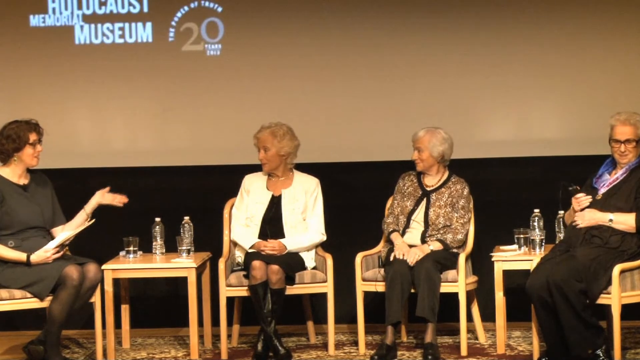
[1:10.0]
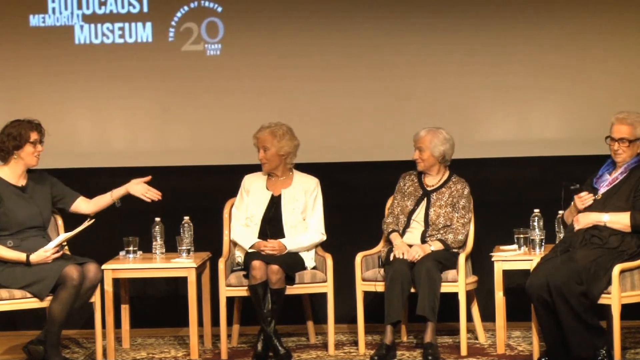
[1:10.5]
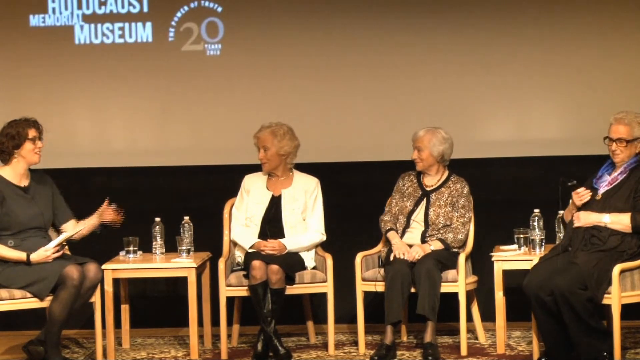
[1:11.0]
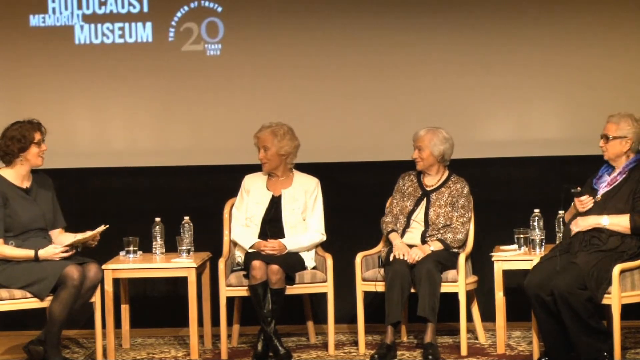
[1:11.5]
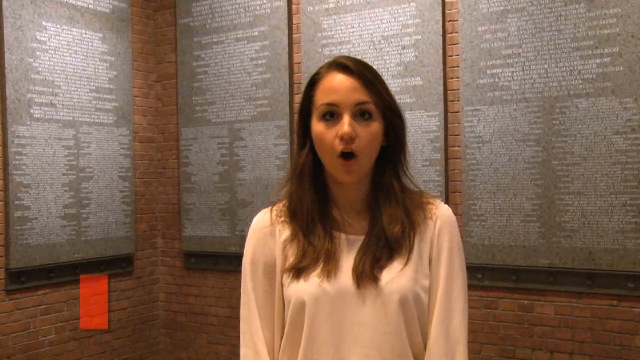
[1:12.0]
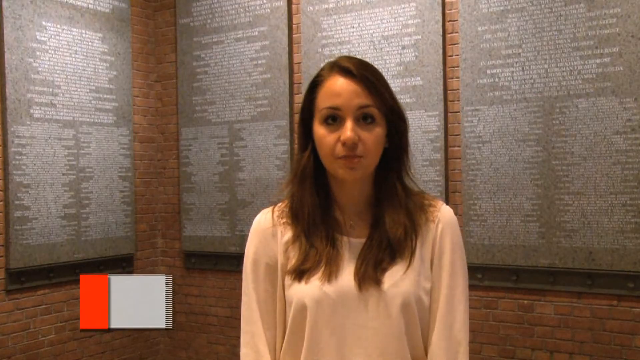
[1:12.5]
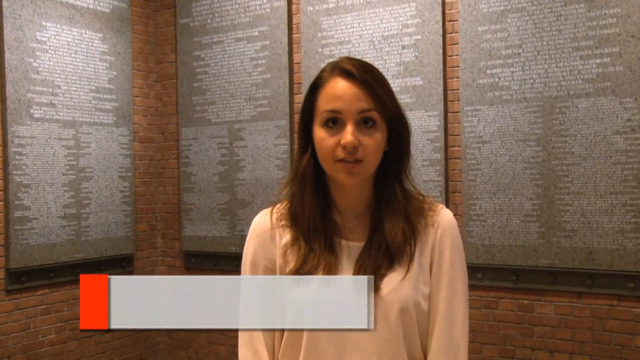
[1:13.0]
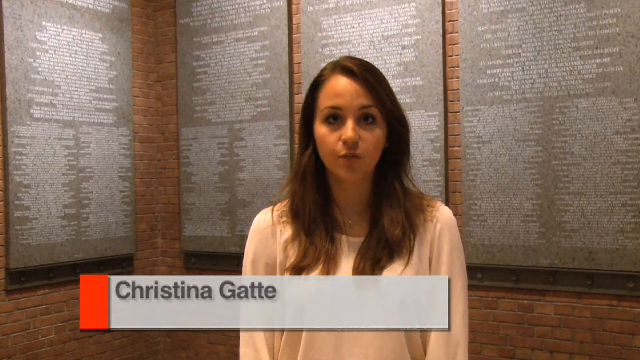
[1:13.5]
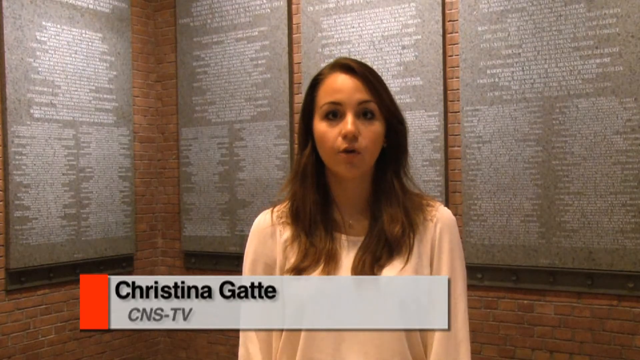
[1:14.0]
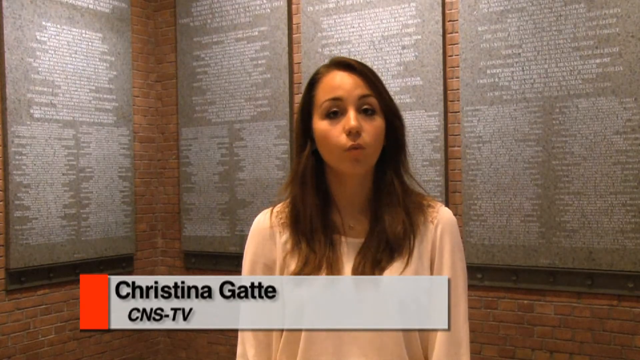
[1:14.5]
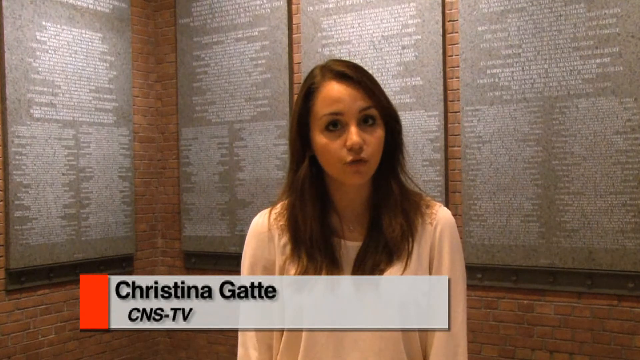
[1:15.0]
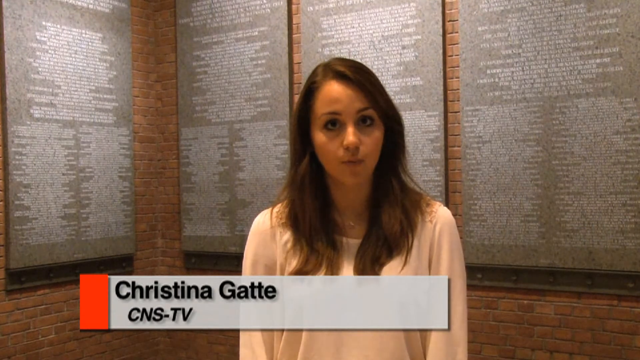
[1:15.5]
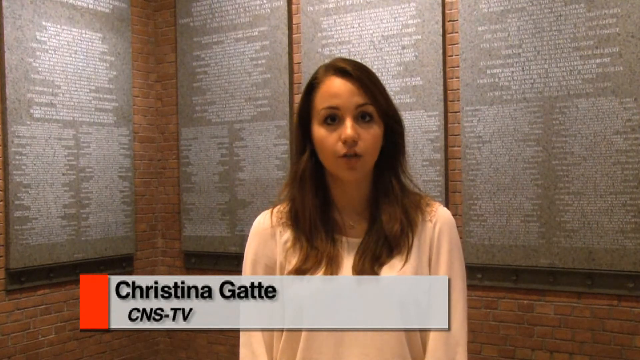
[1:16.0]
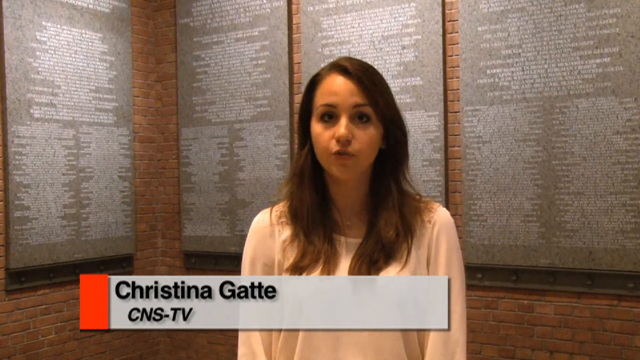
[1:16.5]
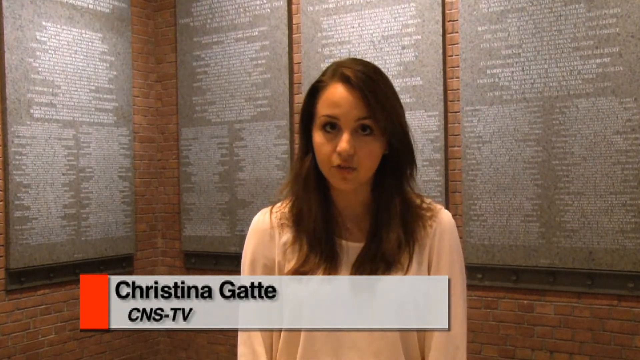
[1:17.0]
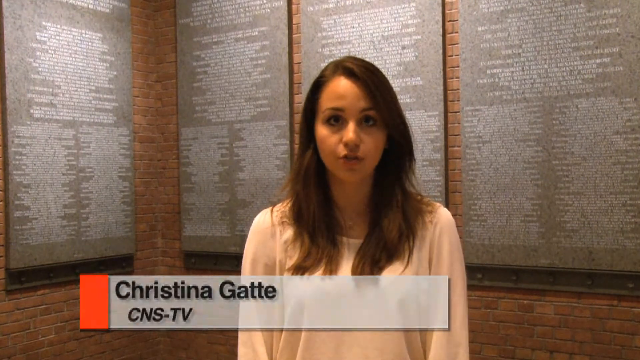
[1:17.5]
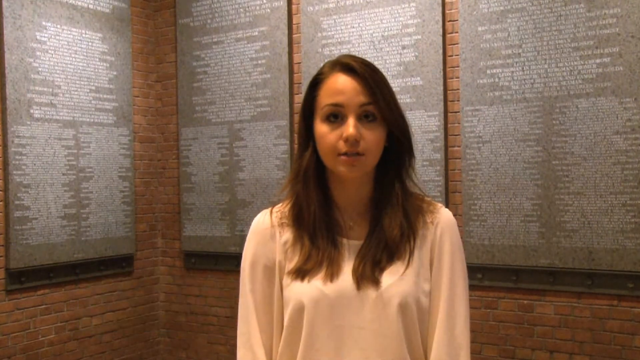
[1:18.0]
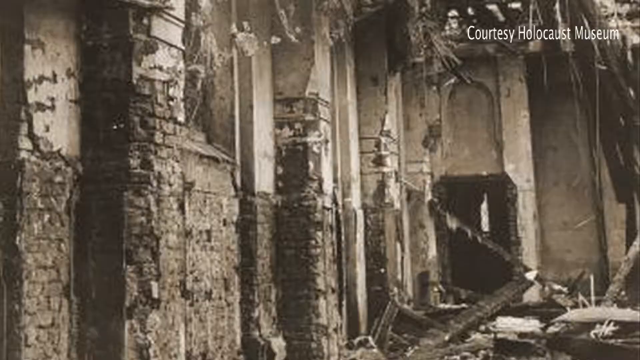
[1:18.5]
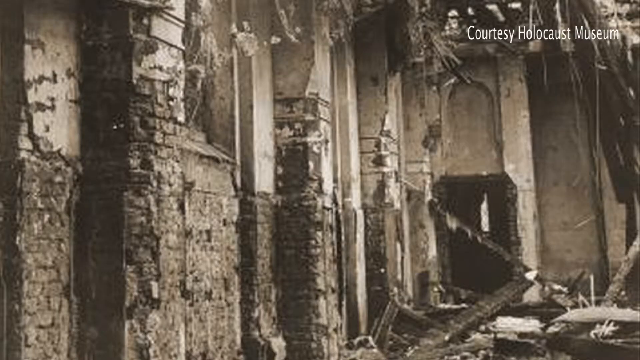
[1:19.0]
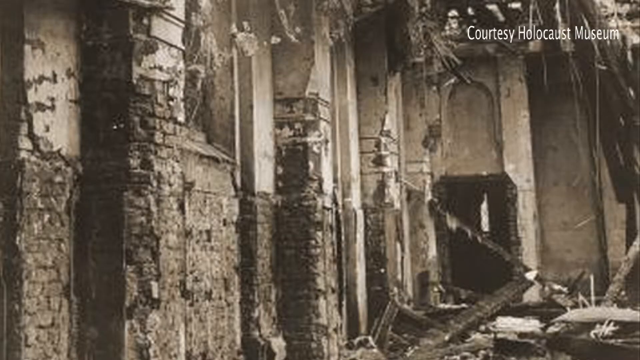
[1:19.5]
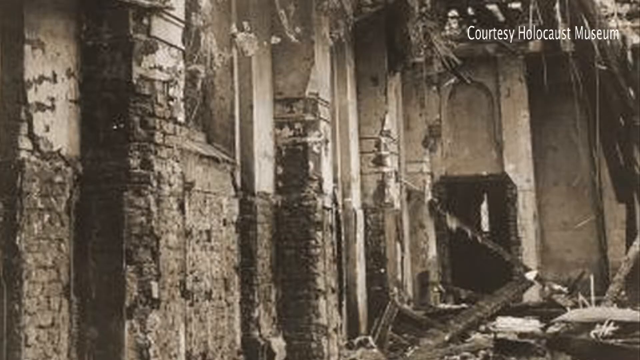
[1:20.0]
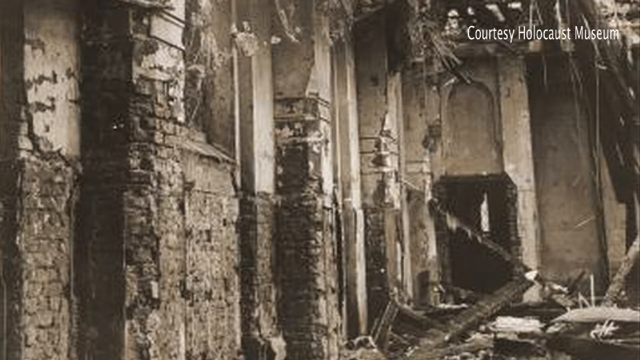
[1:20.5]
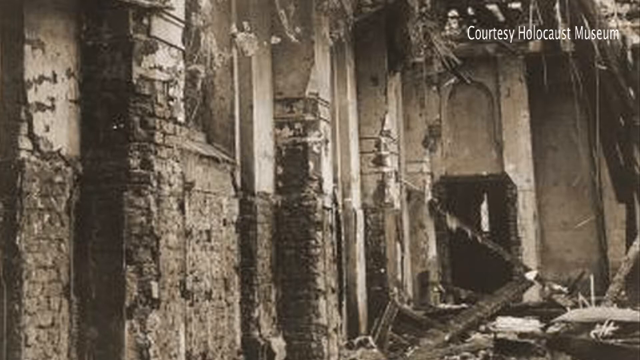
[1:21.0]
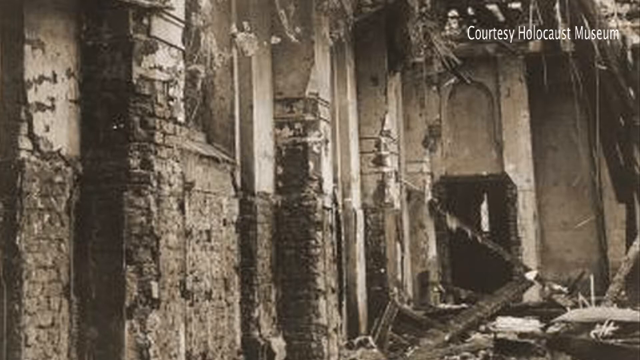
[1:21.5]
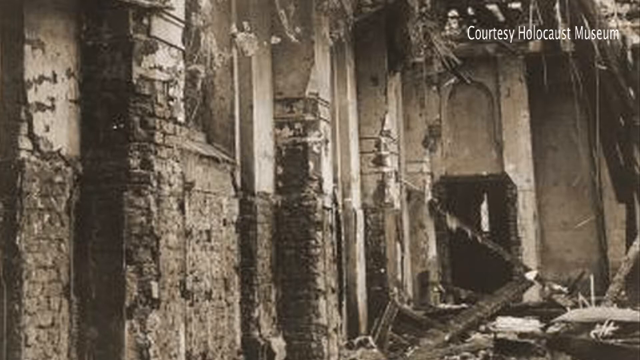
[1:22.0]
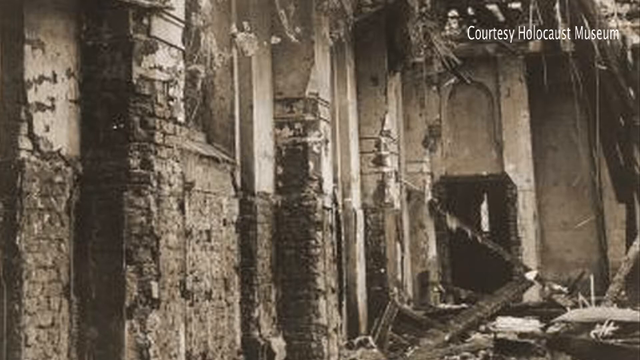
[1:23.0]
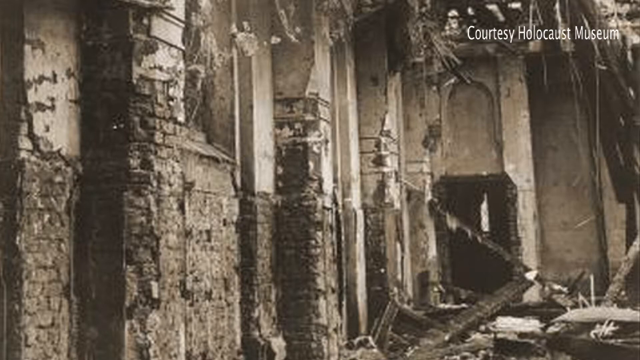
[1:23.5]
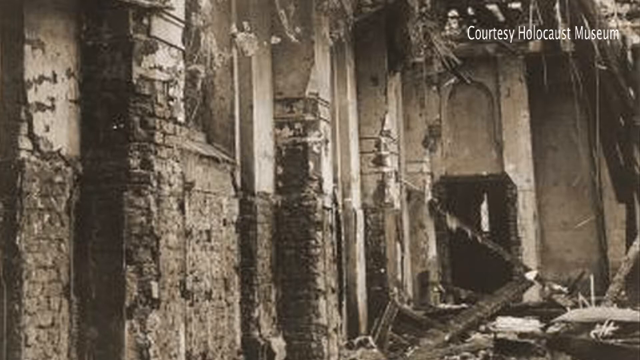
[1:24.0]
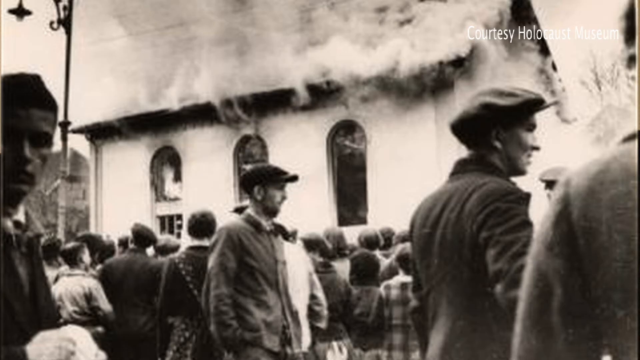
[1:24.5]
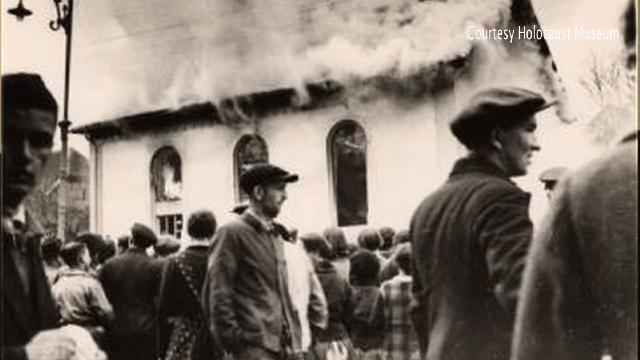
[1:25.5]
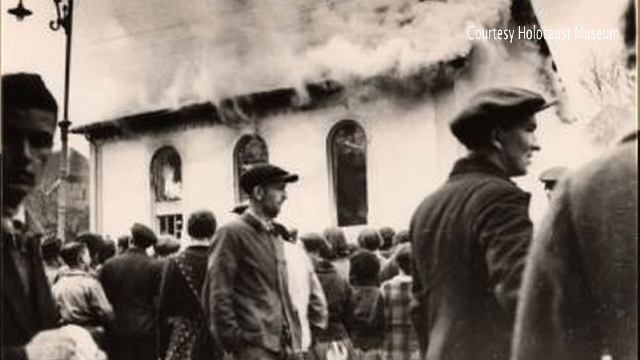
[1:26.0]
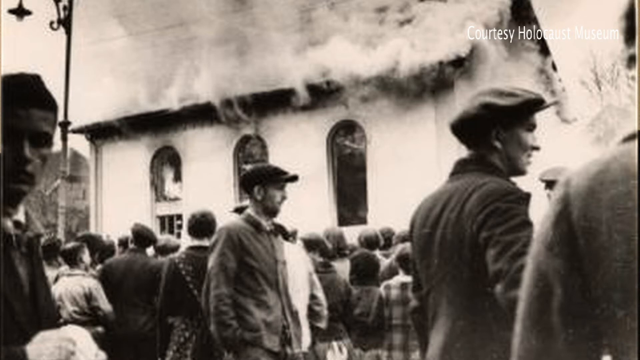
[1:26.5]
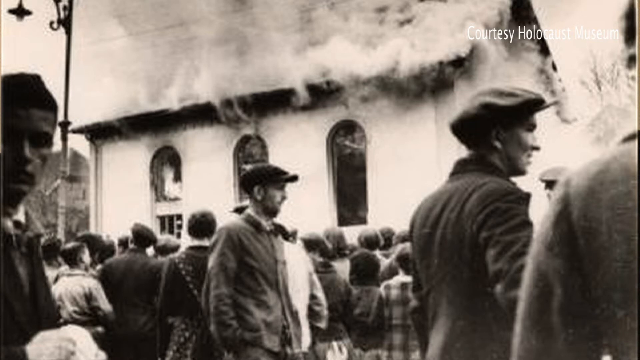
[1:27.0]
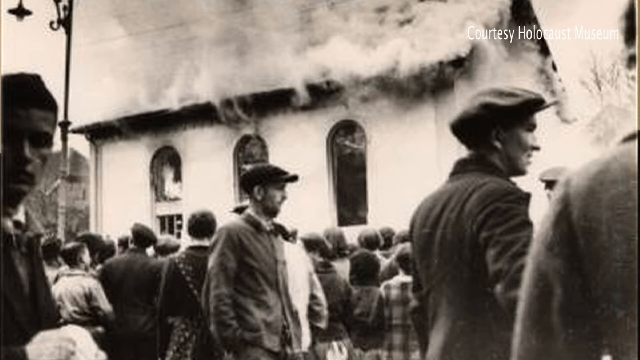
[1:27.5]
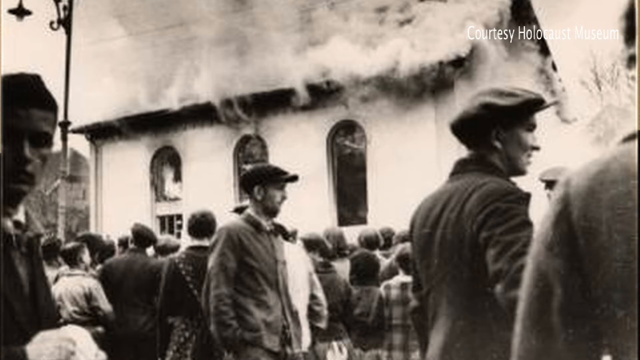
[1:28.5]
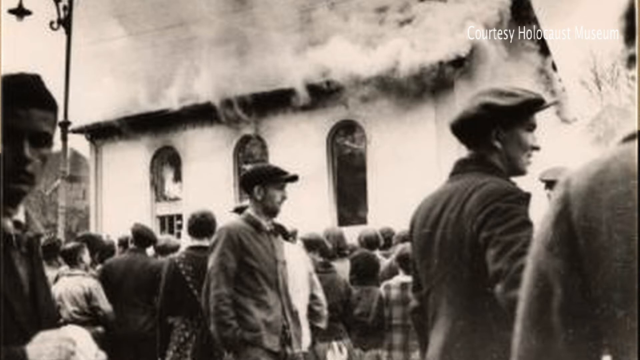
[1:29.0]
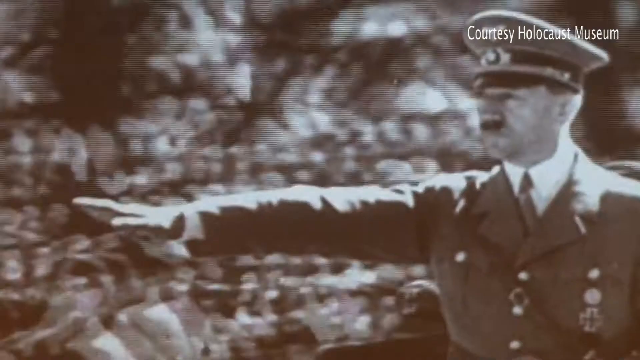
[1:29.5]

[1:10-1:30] The video starts with CNS, the producer. People are very happy on the sidelines of a parade, and there is a big puppet in the parade. Jill Folly, a Kristallnacht survivor, speaks into a microphone. A picture shows her as a young girl. Two Jewish storefronts have their windows broken out. Hebrew writing that is part of a Talmud is laid out. Two men stand outside in front of a building holding a document. Wires are broken in front of a window of panes. In a museum, a person looks at pictures on the wall. Pictures show a destroyed, decayed Talmud. Men in Nazi uniforms with Nazi insignia walk in a parade, then walk around casually. A small building's roof is on fire, then a larger building is on fire with many people, probably 50 or more, standing around. The scene returns to the museum with people looking at pictures on the wall. A panel discusses the Holocaust, then Christina Gatti, the newscaster reporting the story, appears. The destroyed interior of a building is shown. The little building is shown on fire again, then the parade, then the panel once again.